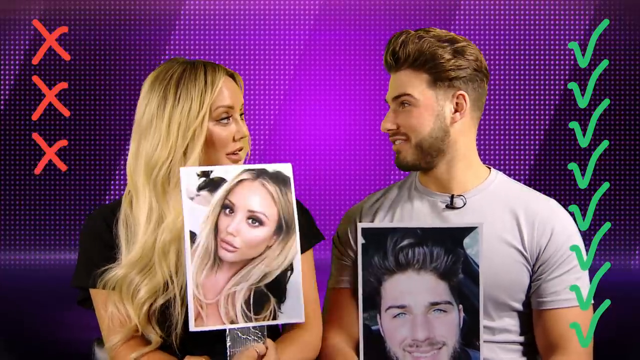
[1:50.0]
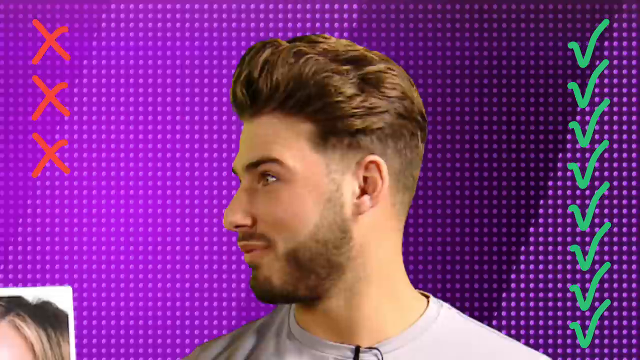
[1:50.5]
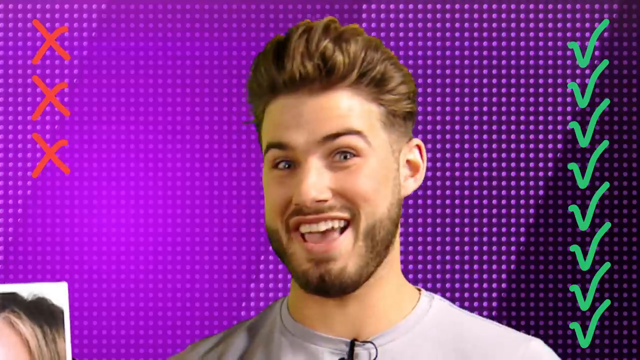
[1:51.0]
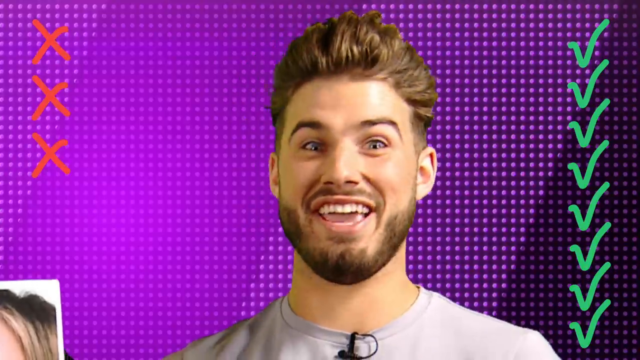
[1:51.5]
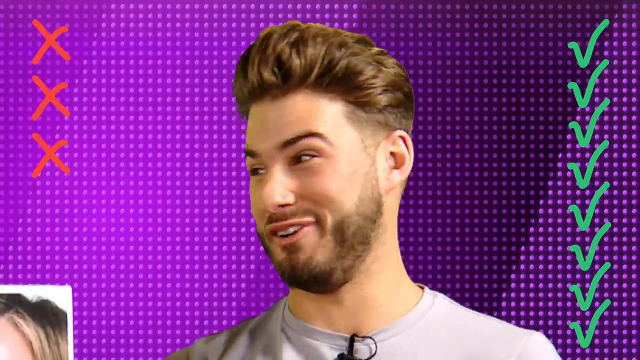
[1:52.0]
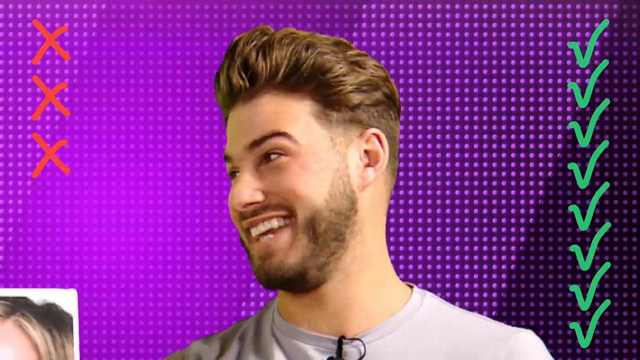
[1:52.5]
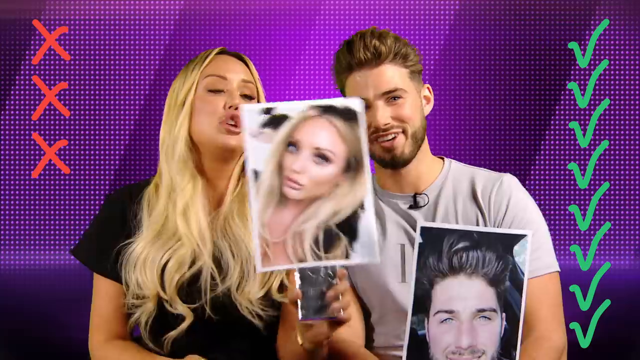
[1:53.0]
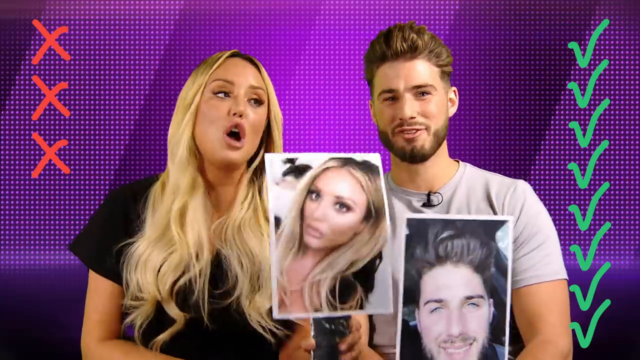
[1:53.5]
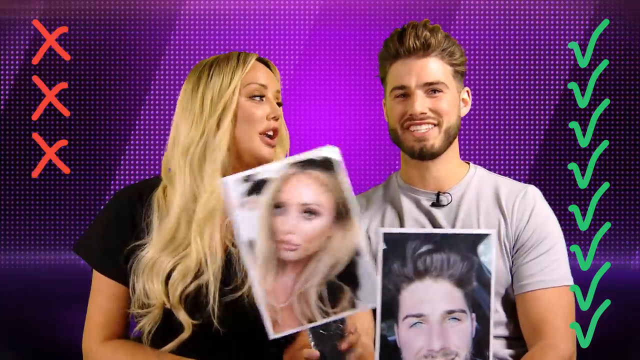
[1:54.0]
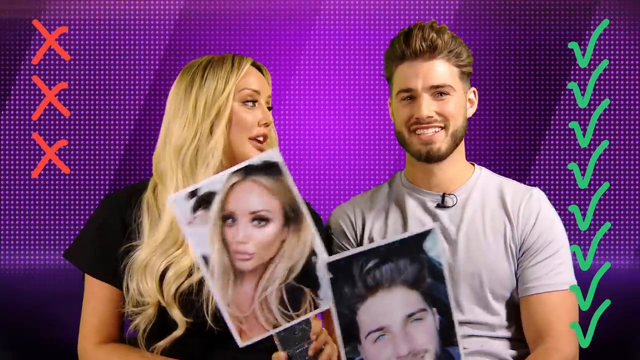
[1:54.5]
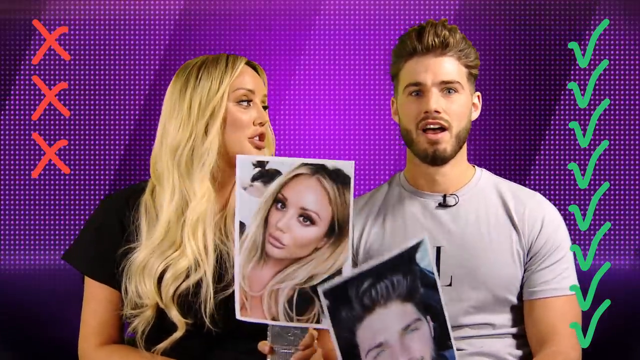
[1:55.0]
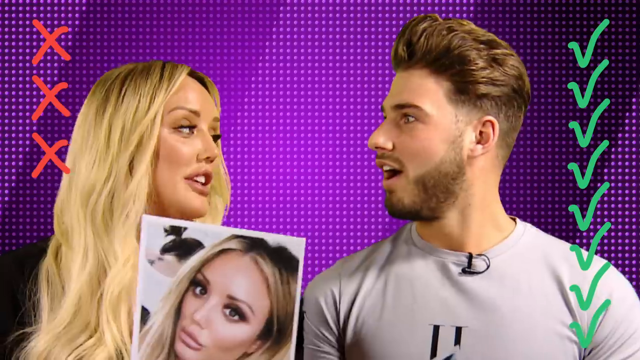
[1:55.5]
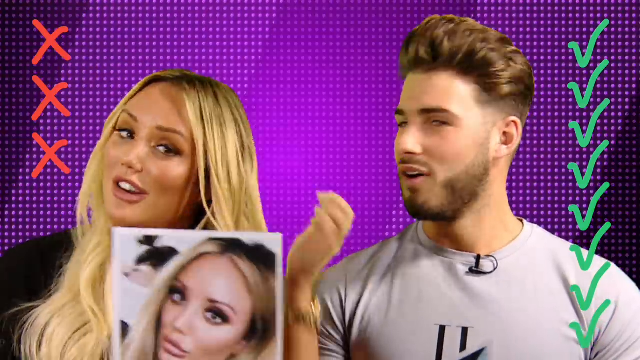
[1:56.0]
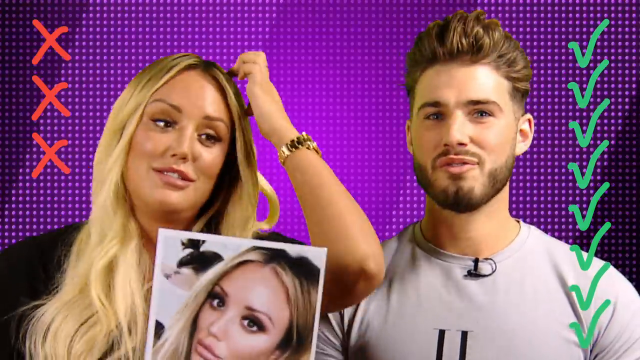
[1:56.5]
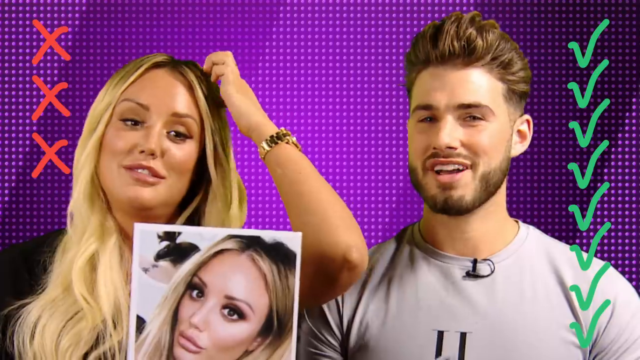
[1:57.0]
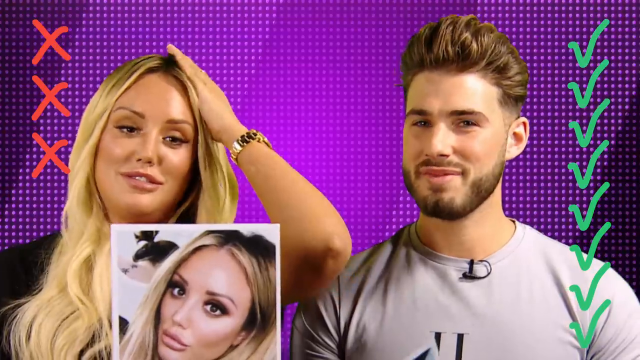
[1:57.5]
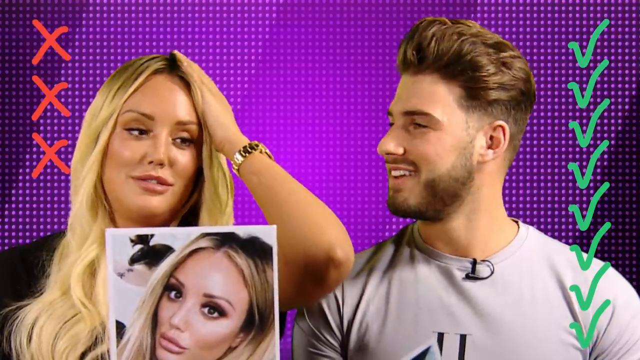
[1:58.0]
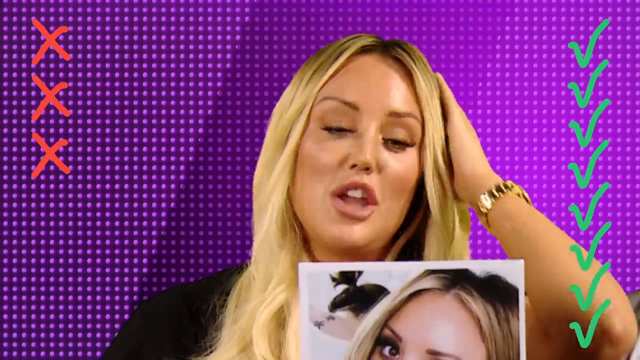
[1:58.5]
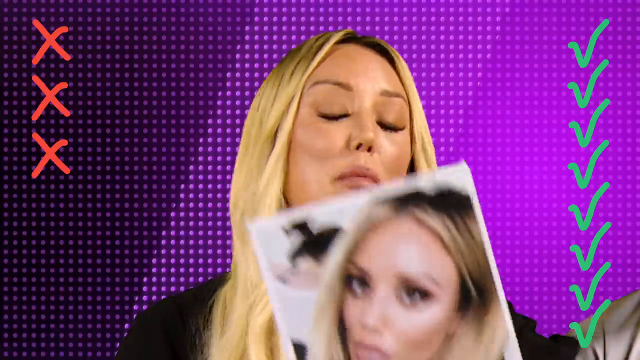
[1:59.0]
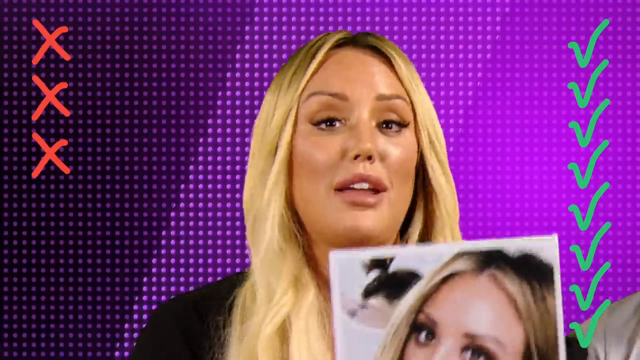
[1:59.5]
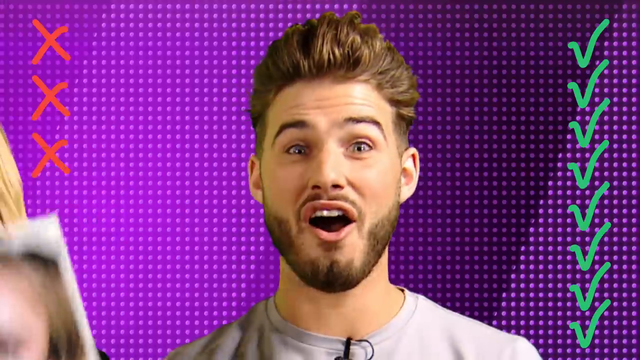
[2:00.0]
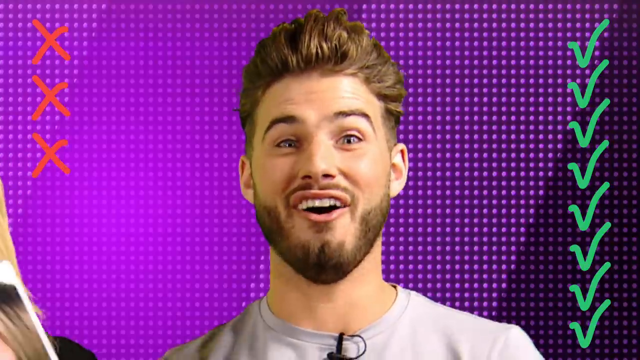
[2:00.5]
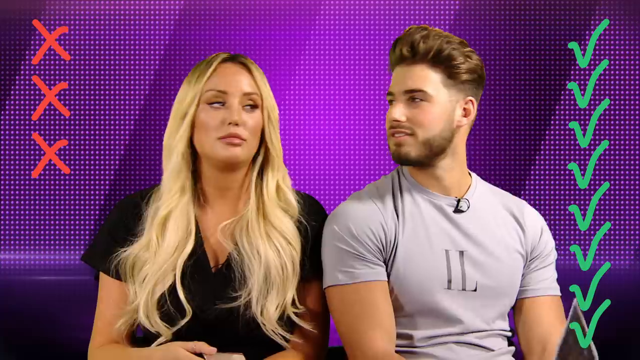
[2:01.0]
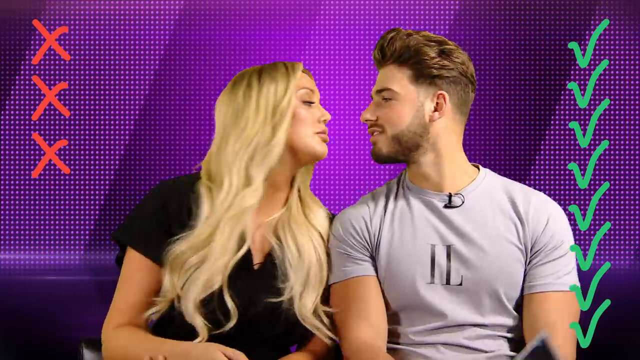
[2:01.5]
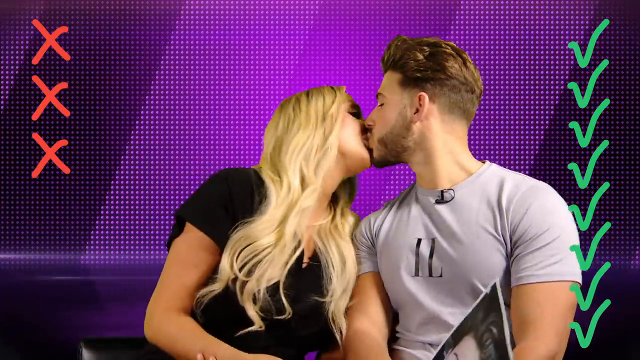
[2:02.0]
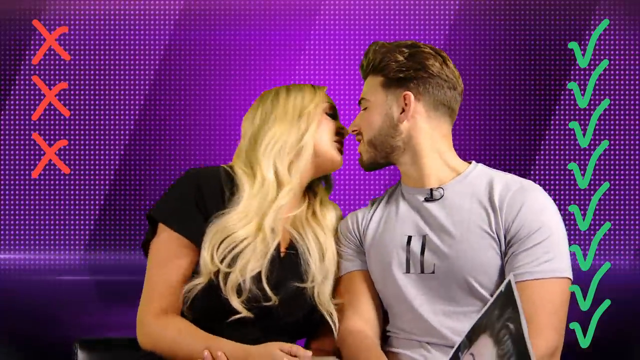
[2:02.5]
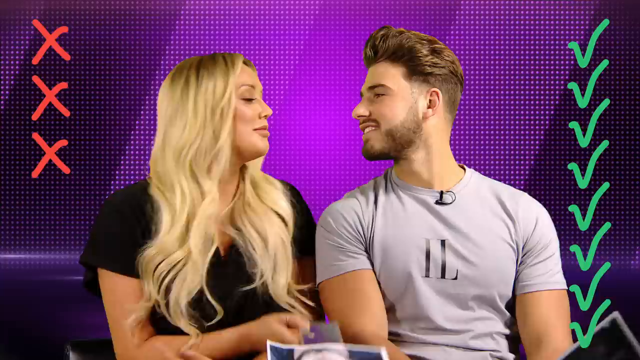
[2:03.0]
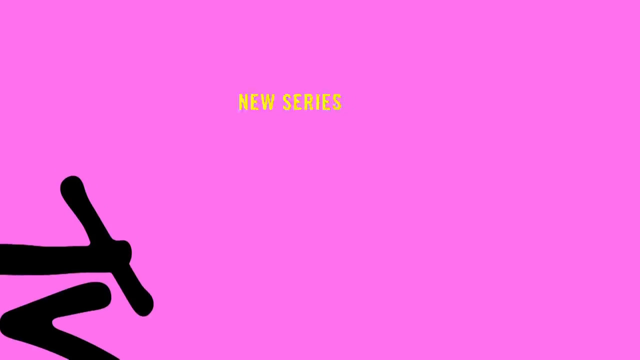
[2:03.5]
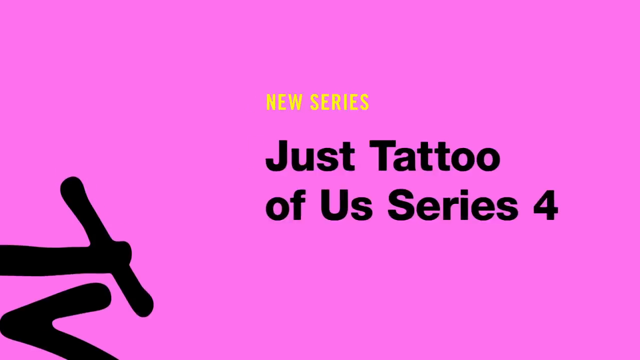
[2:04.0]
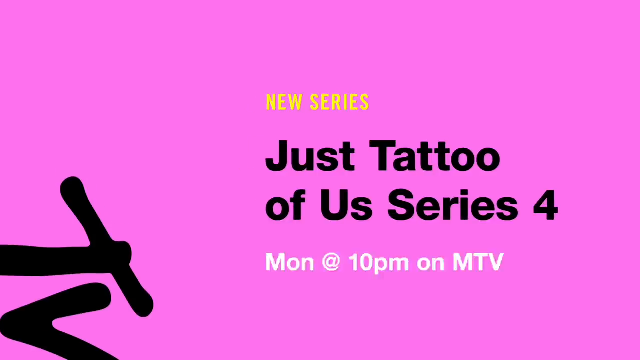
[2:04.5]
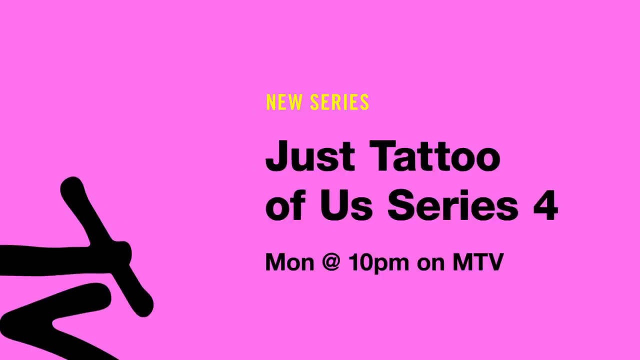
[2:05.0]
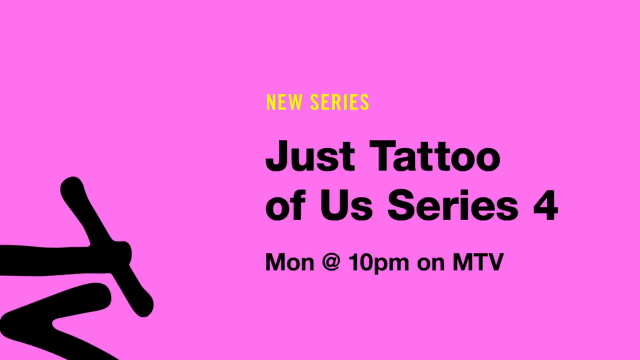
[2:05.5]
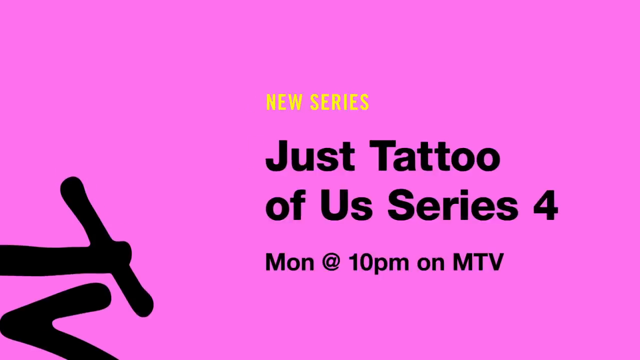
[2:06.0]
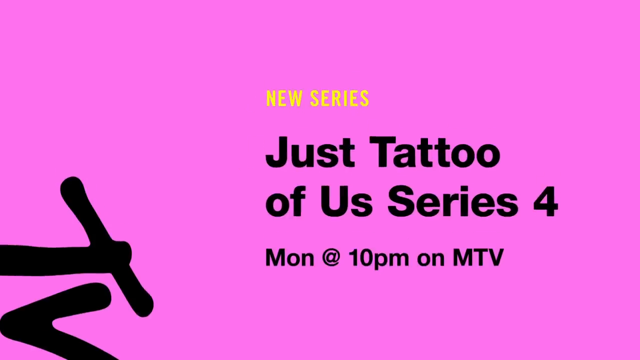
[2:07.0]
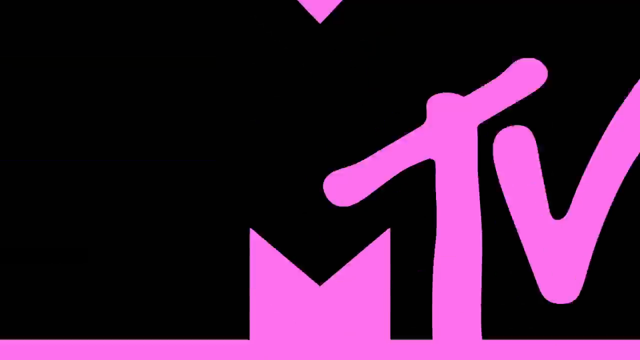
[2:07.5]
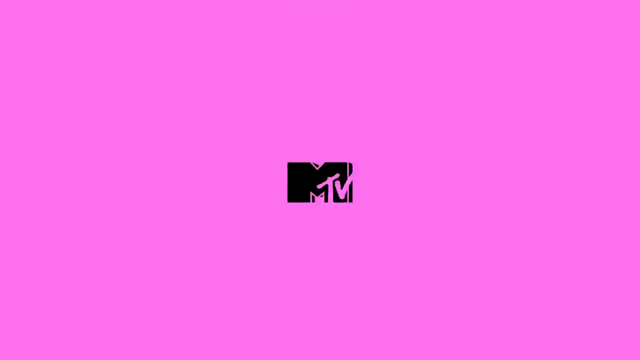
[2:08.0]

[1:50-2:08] The two have a somewhat humorous discussion: he laughs while she shakes her post with her face on it around. She looks like she is insisting, and he looks like he is disagreeing and laughing about it. Then they kiss, and the video fades to a pink screen with the MTV logo. After "new series Just Tattoo of Us" is displayed, the logo moves up, and there is an upside-down logo with a circle on top of it, with an ad for a different video on either side of that logo.